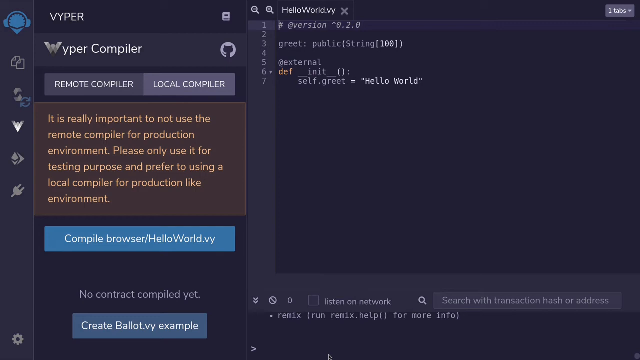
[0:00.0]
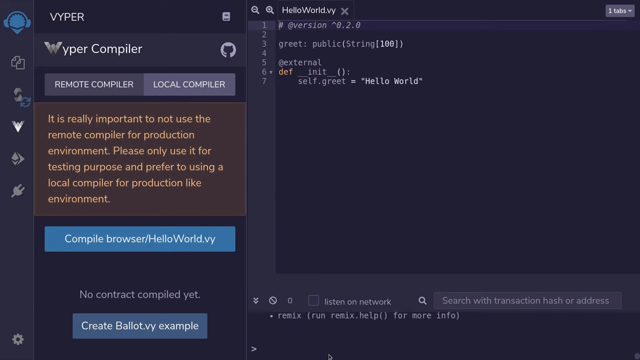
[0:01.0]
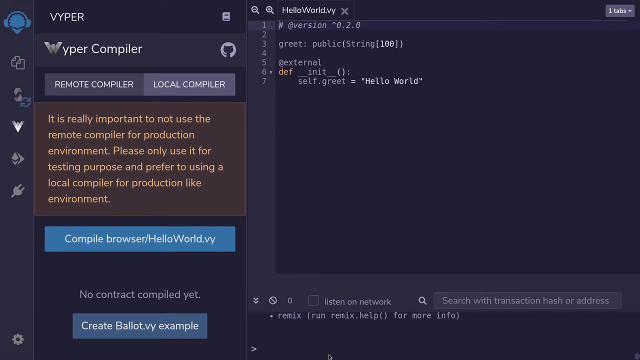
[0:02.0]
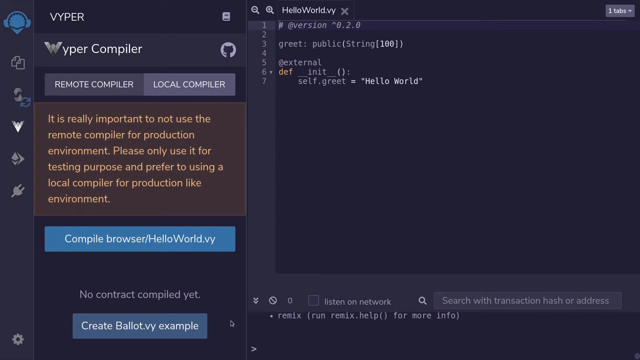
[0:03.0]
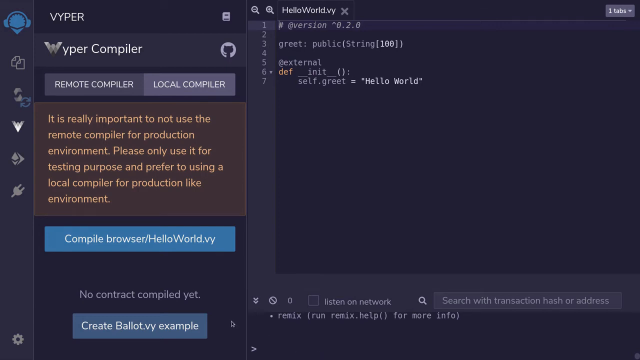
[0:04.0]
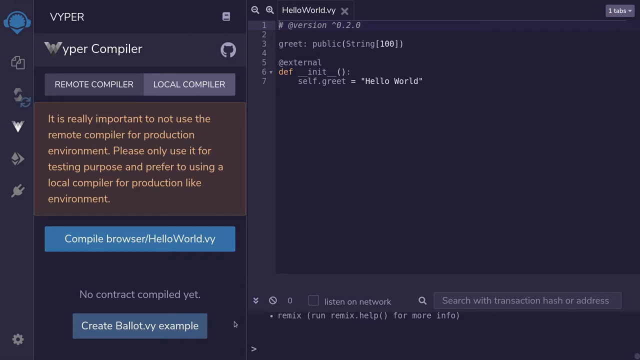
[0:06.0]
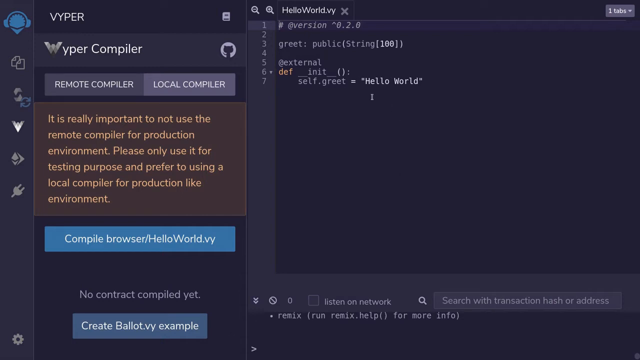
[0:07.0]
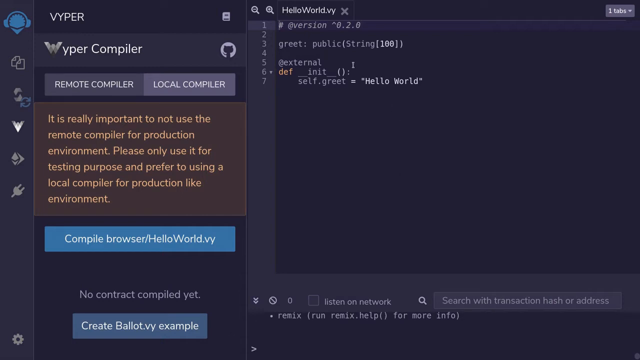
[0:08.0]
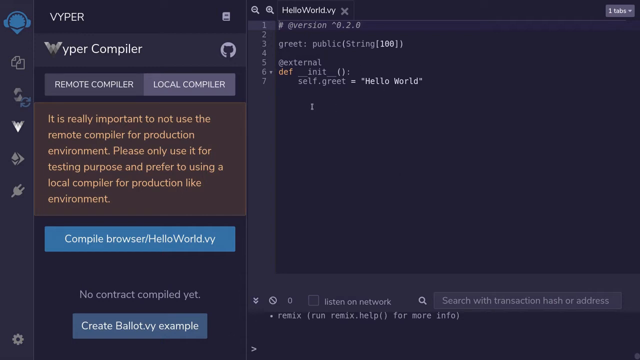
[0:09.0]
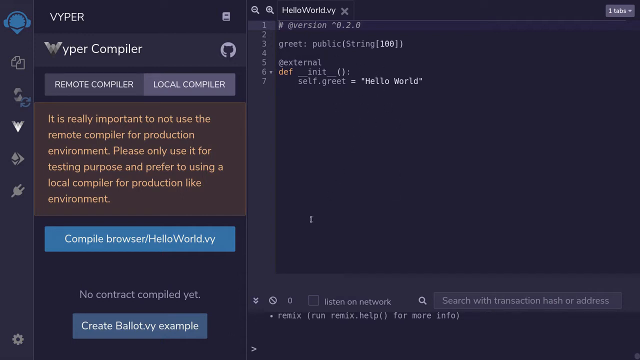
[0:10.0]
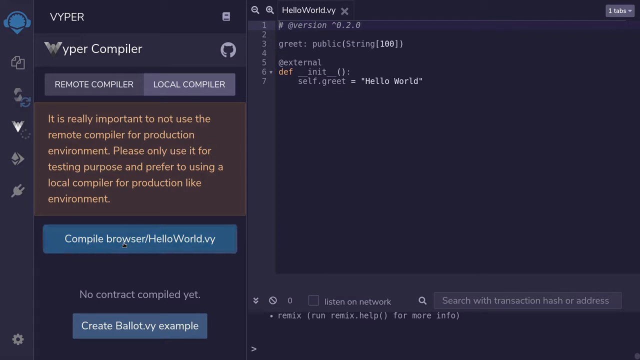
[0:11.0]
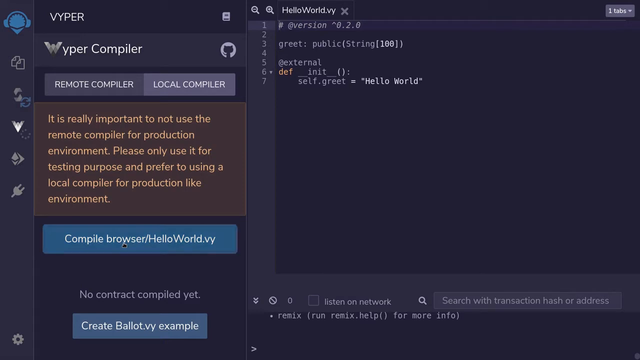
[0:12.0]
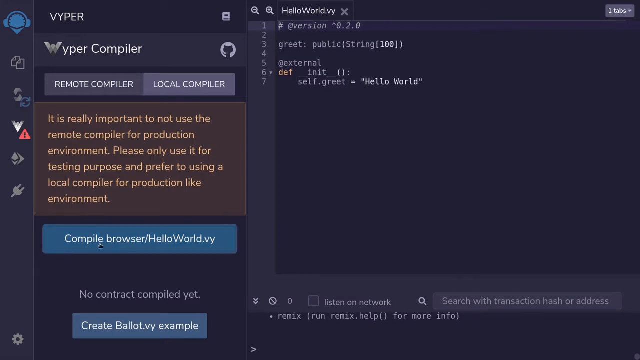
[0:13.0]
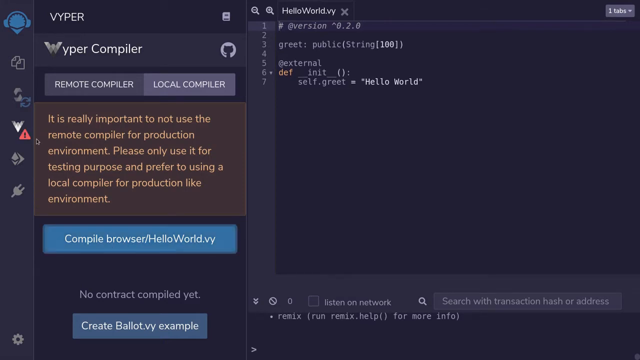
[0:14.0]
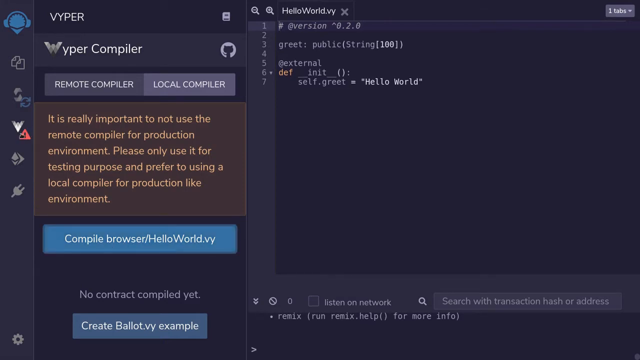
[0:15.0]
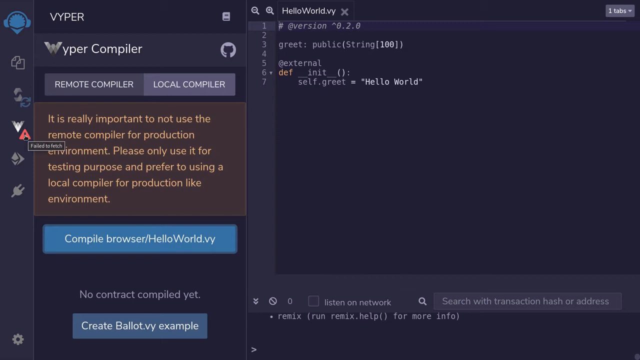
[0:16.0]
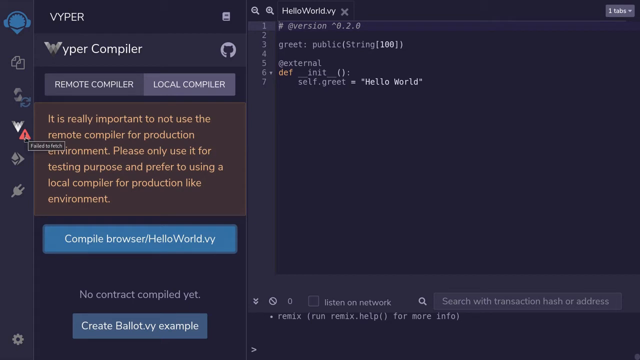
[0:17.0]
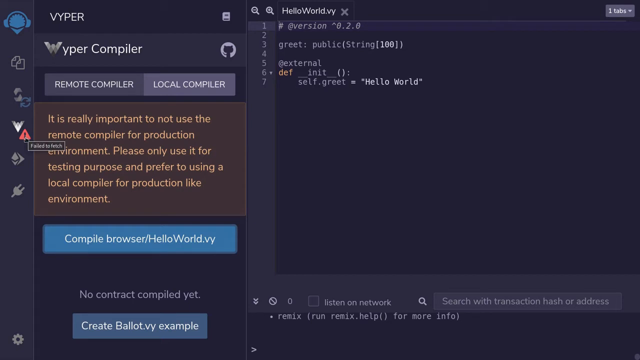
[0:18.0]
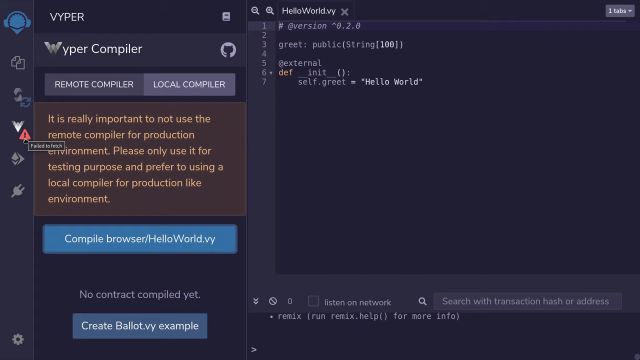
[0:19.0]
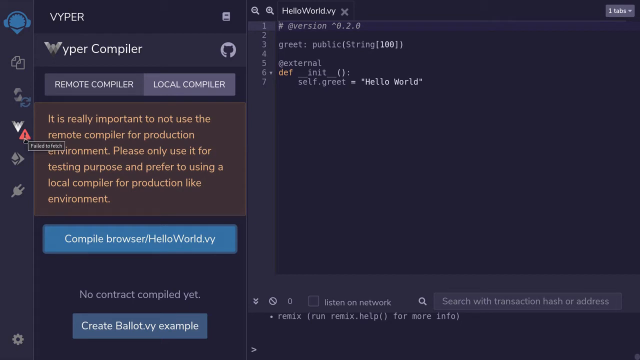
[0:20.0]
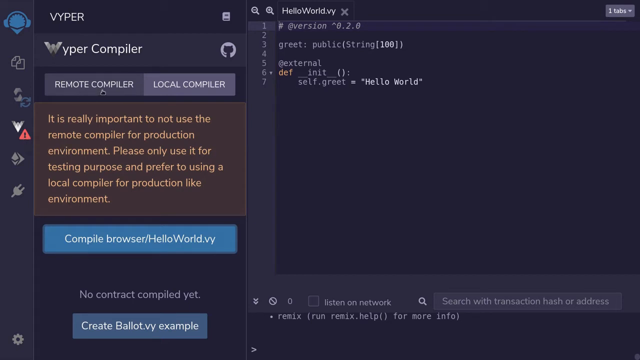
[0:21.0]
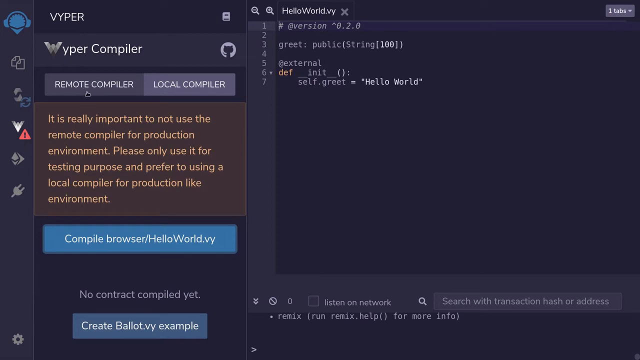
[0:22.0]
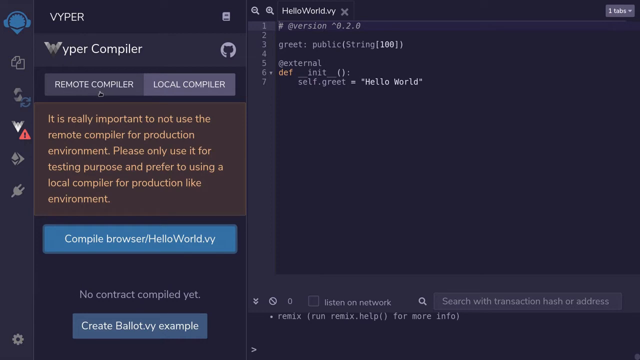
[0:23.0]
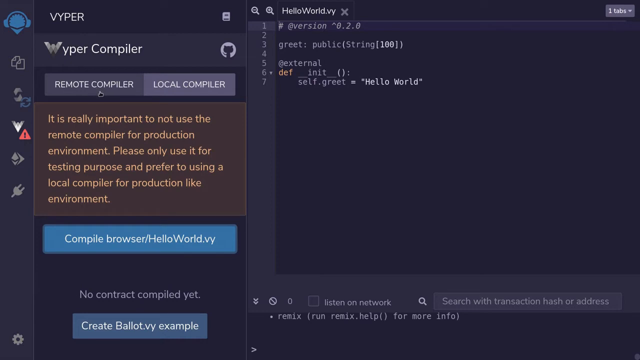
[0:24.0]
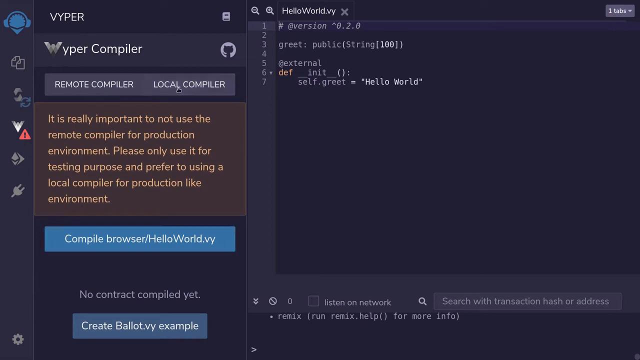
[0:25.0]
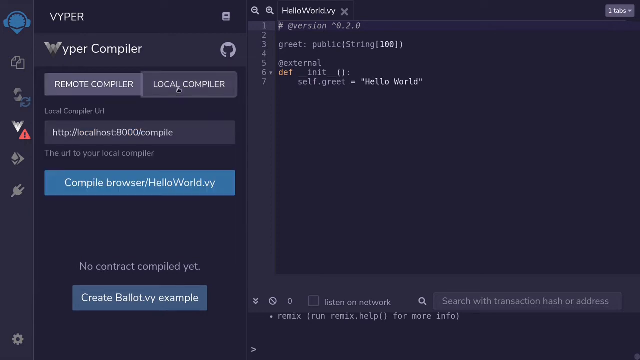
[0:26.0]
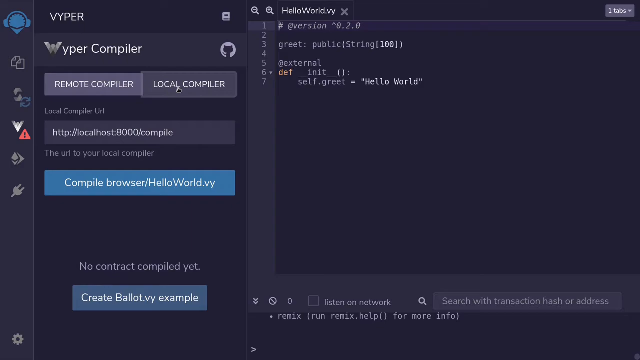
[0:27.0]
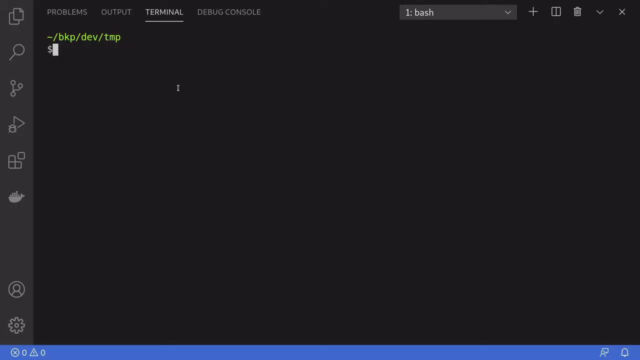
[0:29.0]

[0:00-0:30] The video is about a Viper compiler, the name of the company or brand being worked with, and covers how to use a remote compiler and a local compiler. The prompt states that it is really important not to use the remote compiler for a production environment, to use it only for testing purposes, and to prefer a local compiler for a production-like environment. The disadvantages are not yet given.